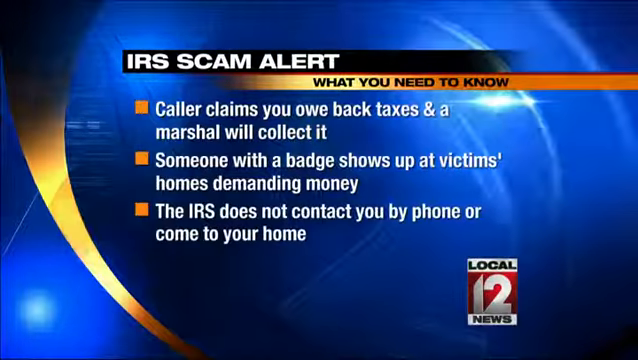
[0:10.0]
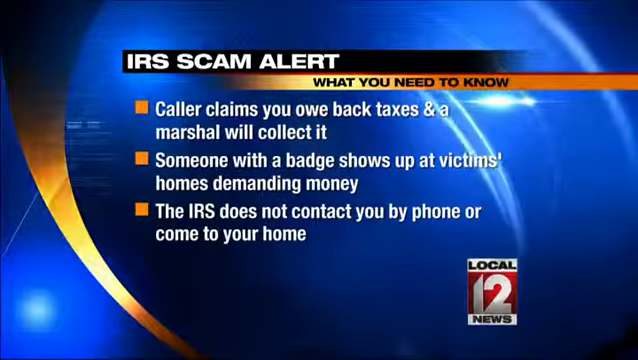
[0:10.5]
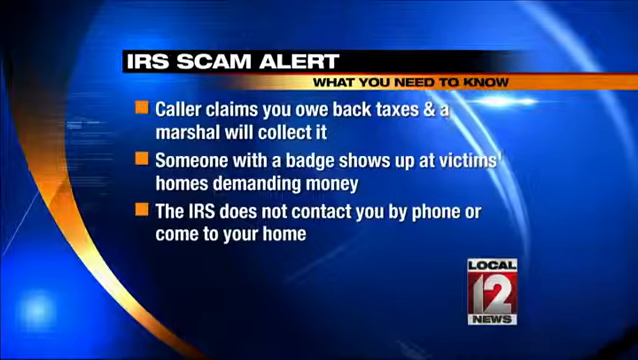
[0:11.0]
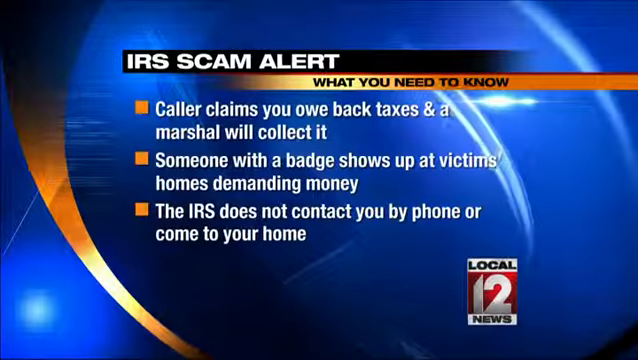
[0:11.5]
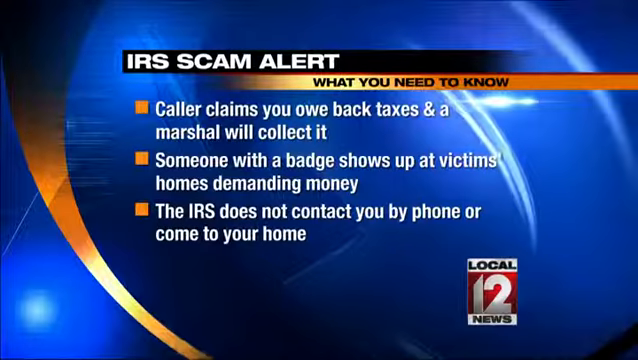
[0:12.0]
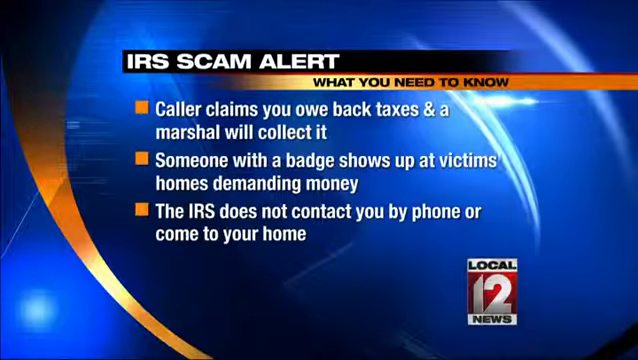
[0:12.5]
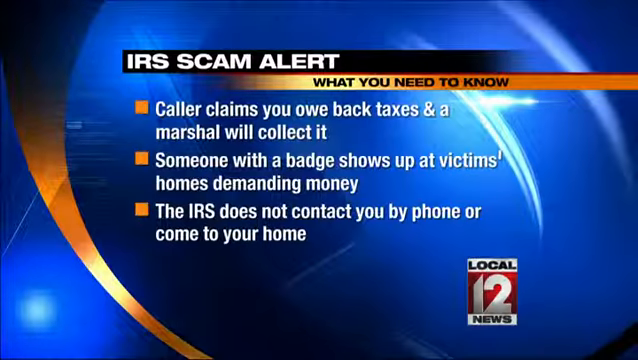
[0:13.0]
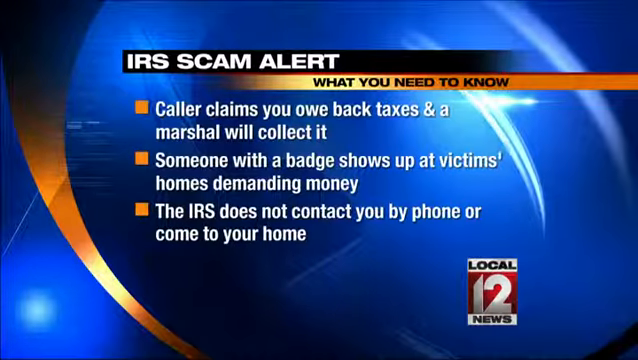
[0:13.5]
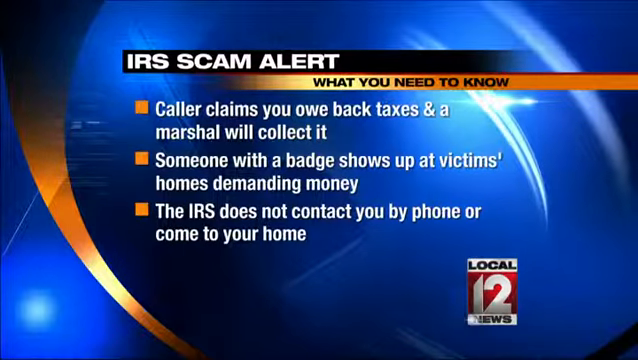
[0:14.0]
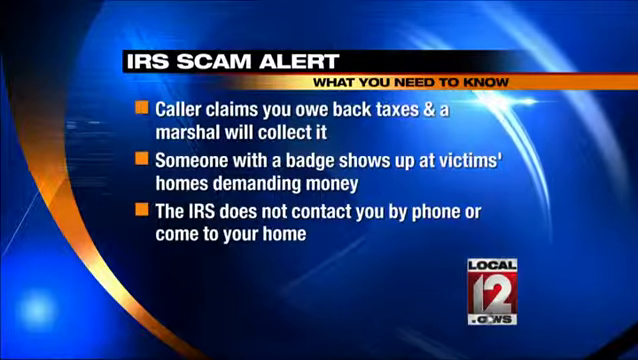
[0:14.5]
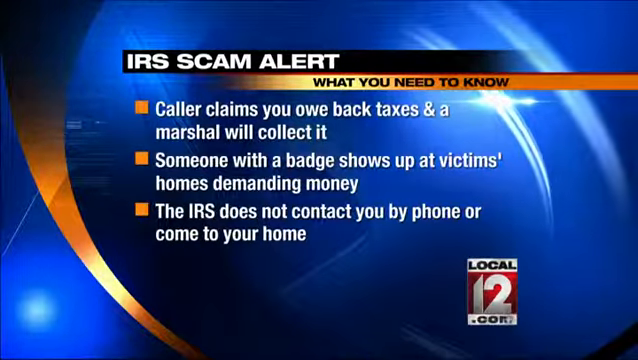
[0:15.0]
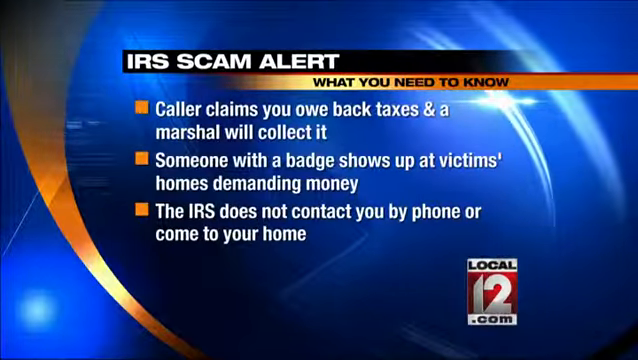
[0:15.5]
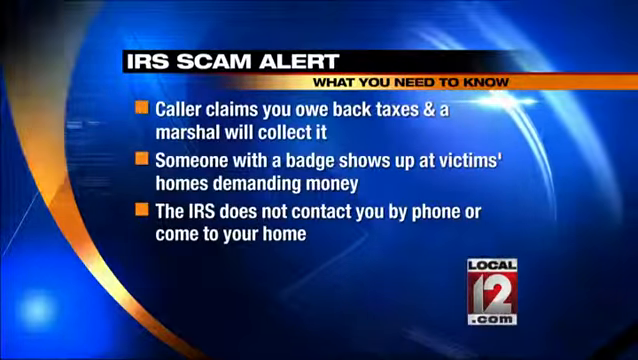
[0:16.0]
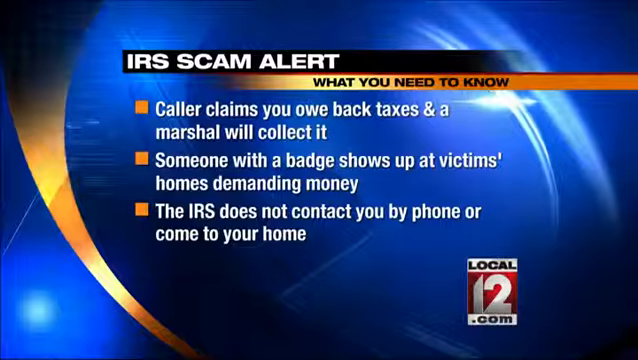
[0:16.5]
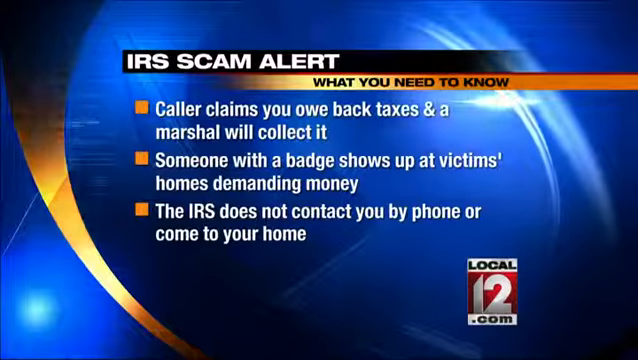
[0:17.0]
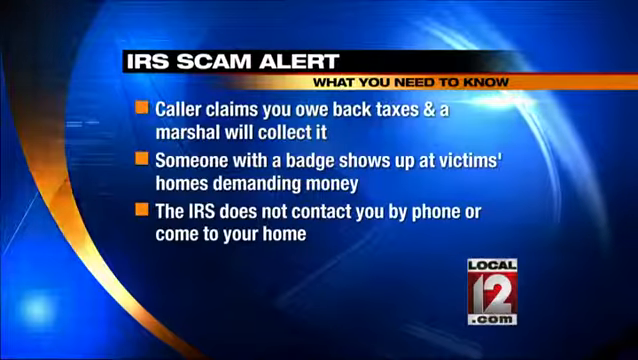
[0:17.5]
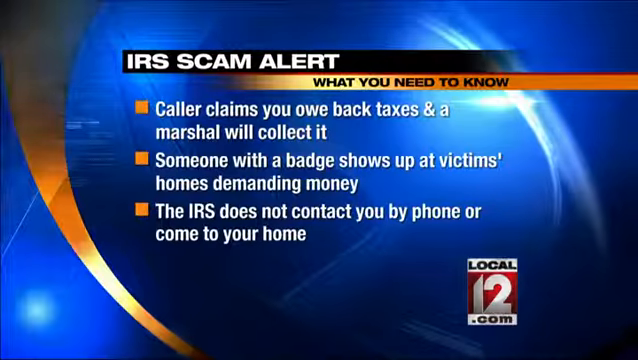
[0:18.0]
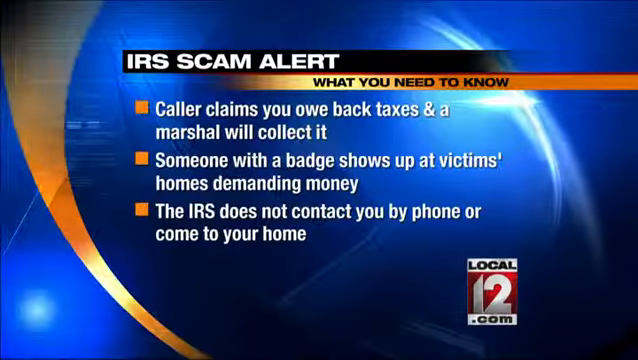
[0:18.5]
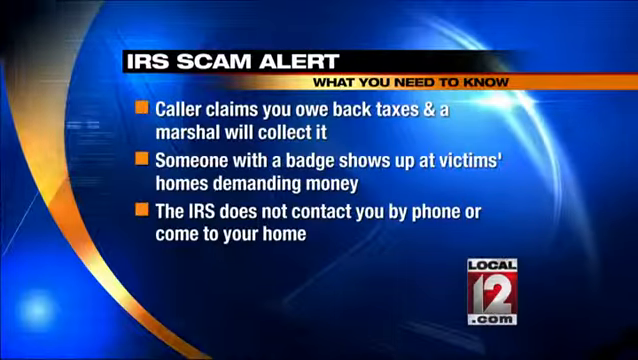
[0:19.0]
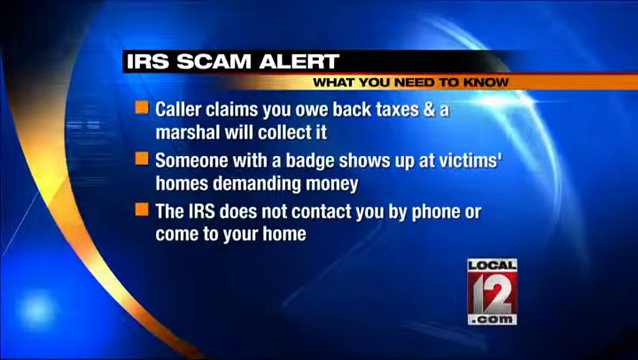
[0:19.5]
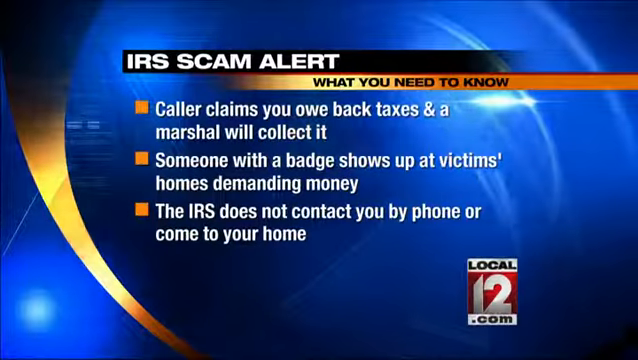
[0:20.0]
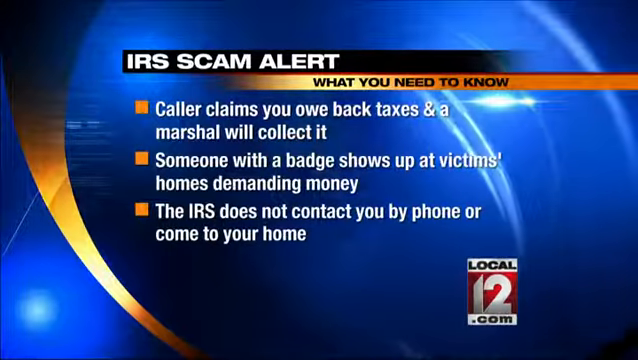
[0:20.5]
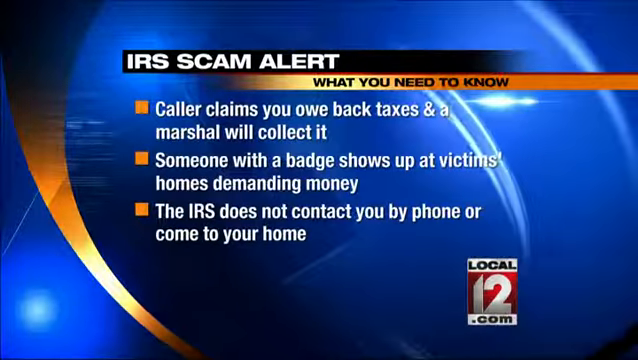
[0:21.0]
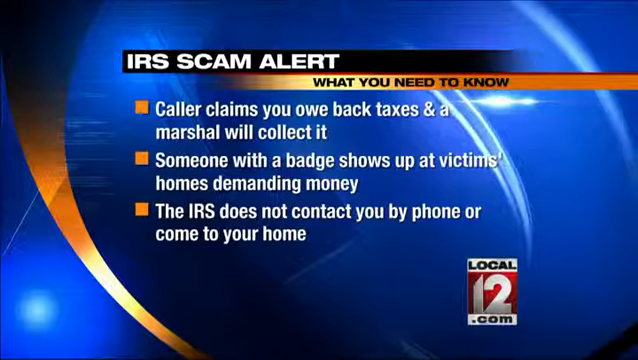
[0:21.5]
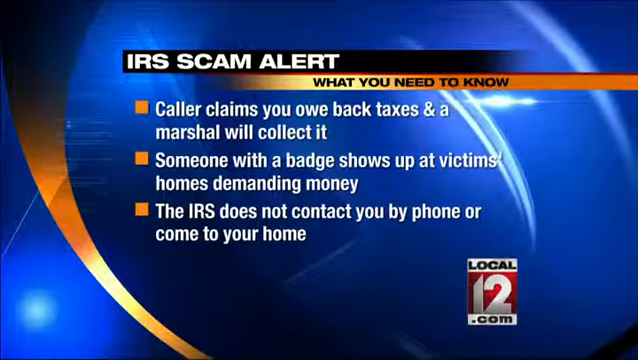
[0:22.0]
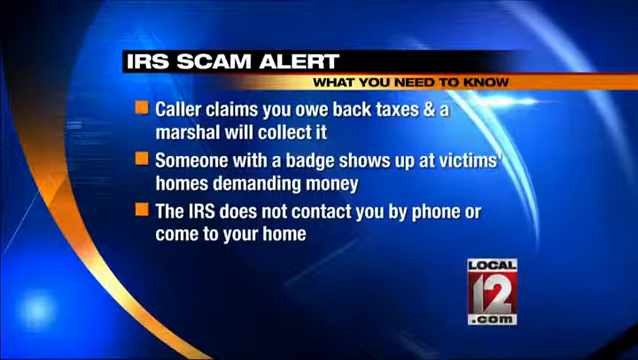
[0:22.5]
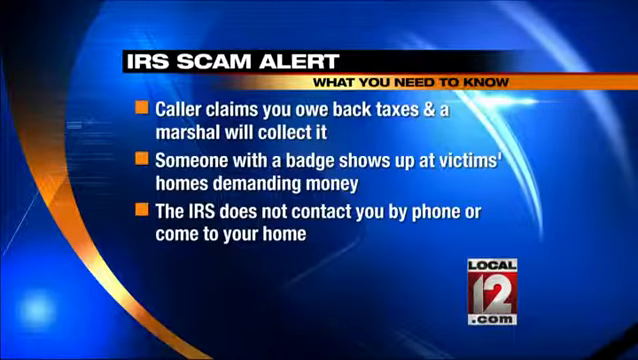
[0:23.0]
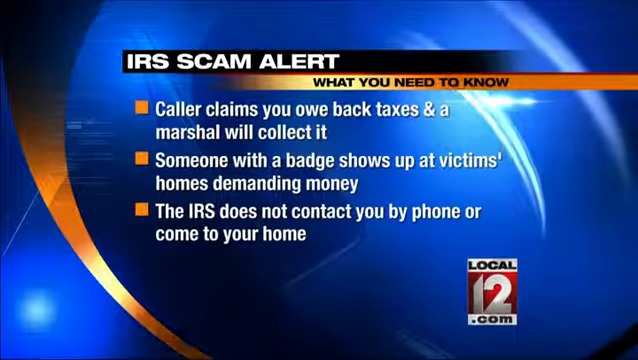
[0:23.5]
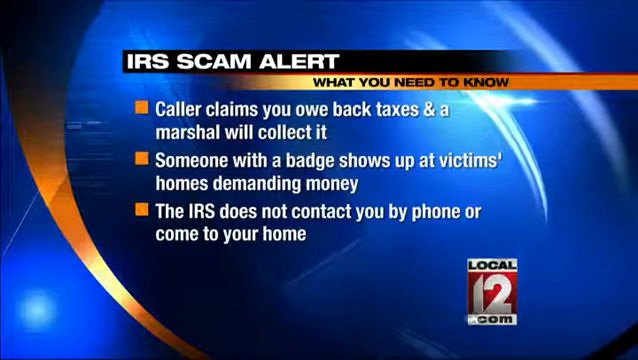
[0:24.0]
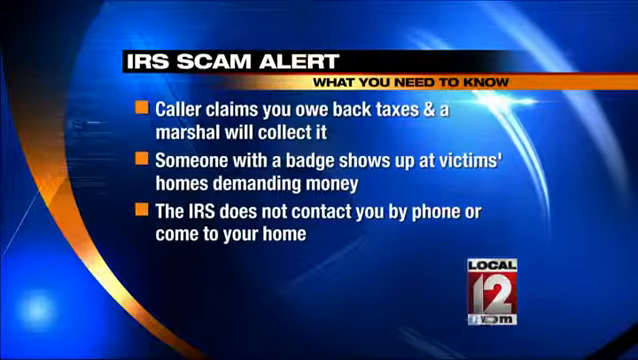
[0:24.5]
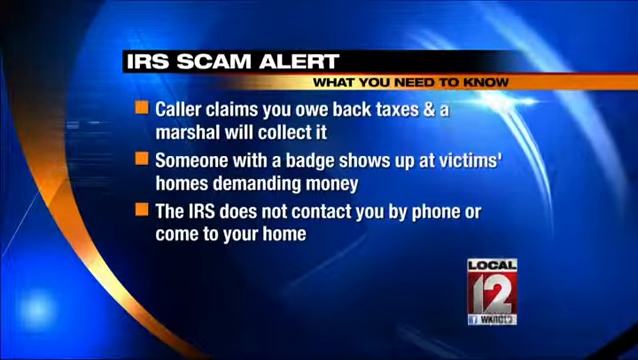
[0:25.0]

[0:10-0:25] The news screen shows a scam alert with the text "IRS scam alert", "what you need to know", "caller claims you owe back taxes and a marshal will collect it", "someone with a badge shows up at victims homes demanding money" and "the IRS does not contact you by phone or come to your house". "IRS scam alert" and "local12.com" are also shown. The news alert is aimed at elderly people, warning them about people pretending to be tax collectors who come to homes demanding money.